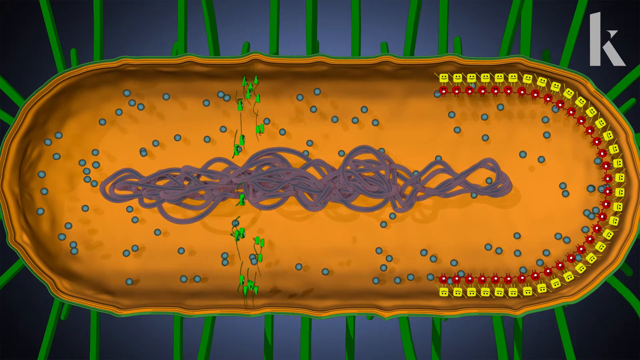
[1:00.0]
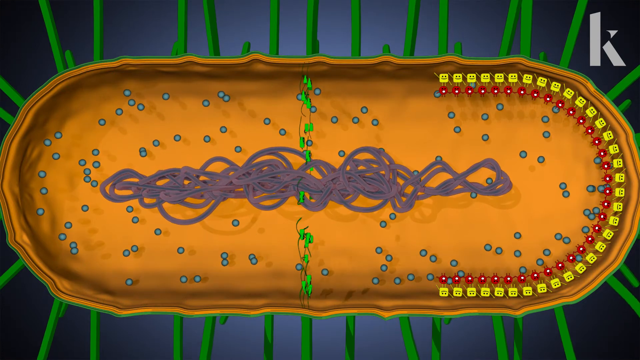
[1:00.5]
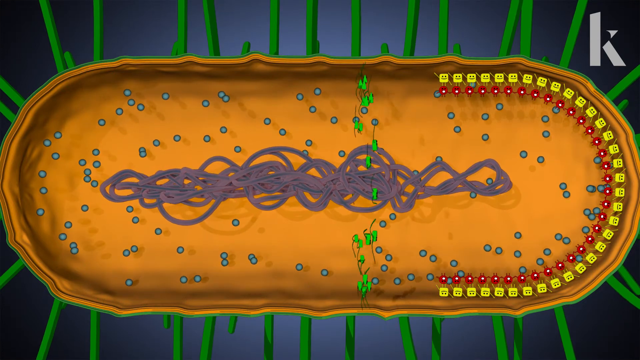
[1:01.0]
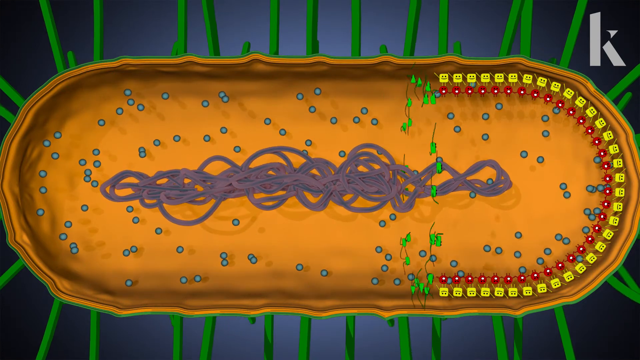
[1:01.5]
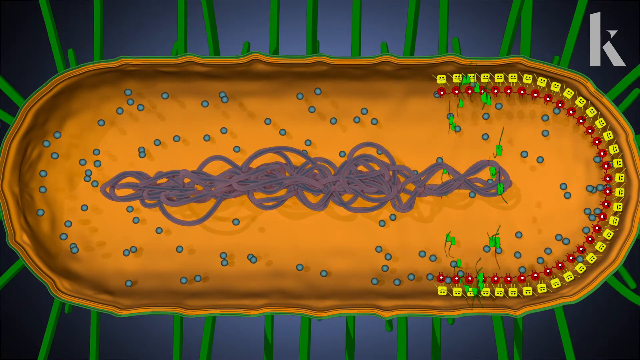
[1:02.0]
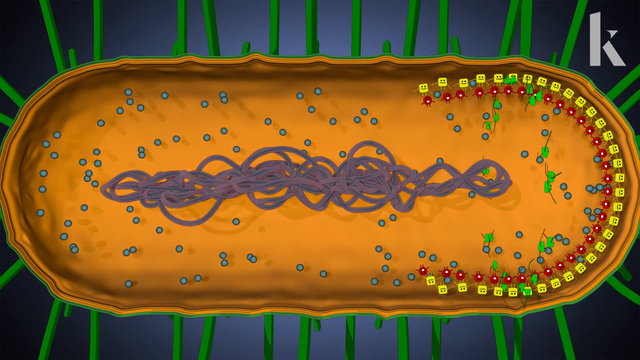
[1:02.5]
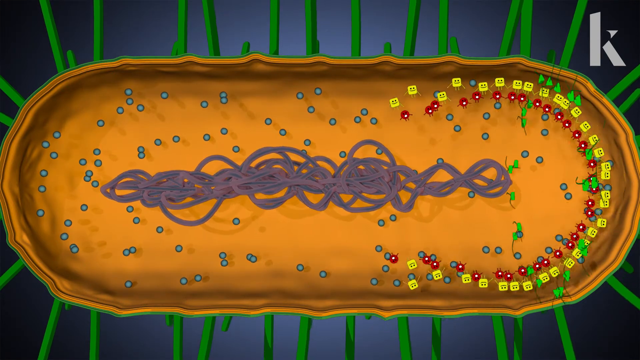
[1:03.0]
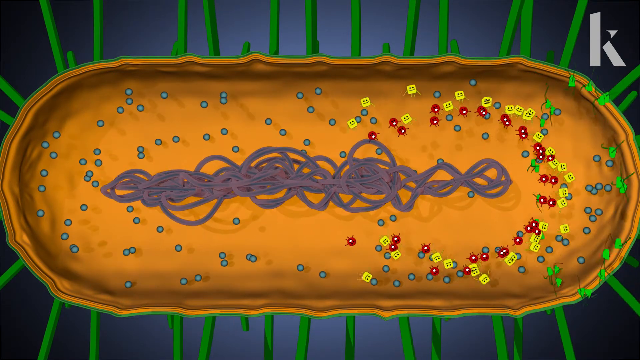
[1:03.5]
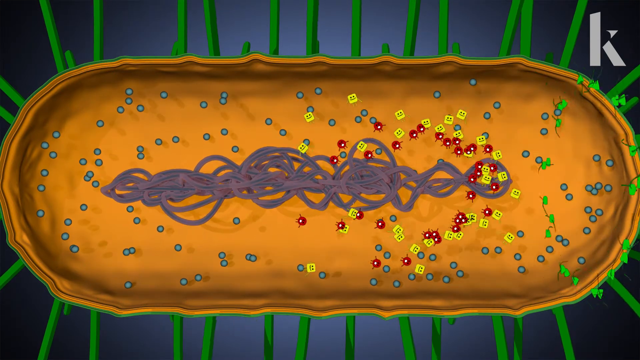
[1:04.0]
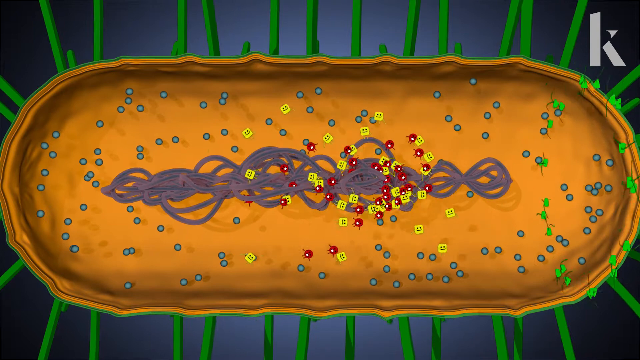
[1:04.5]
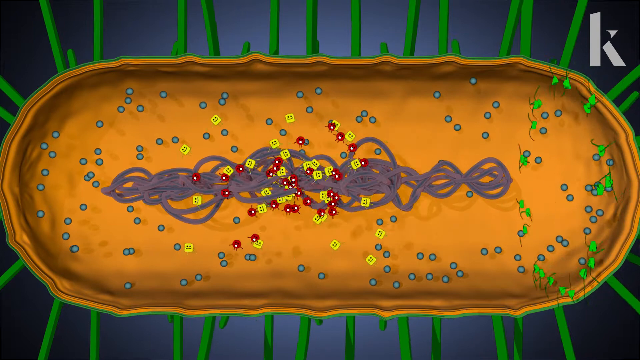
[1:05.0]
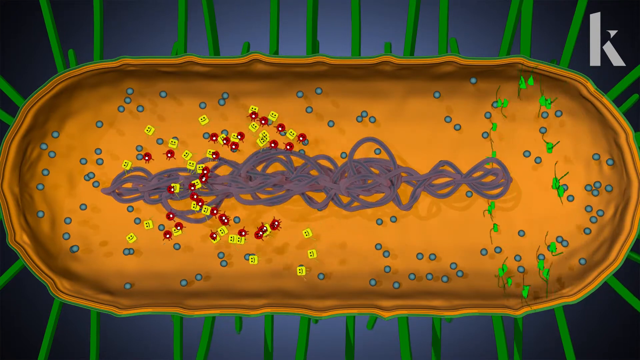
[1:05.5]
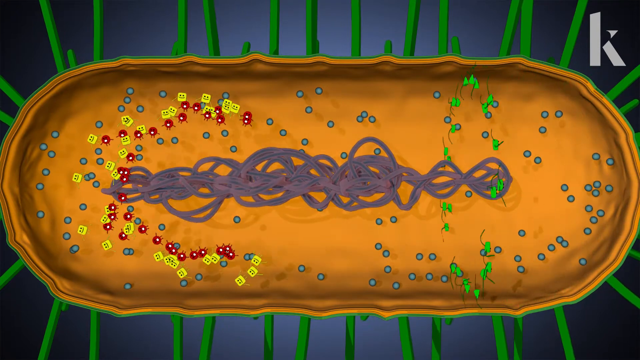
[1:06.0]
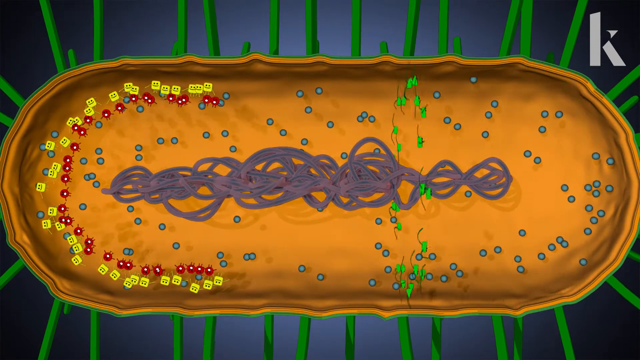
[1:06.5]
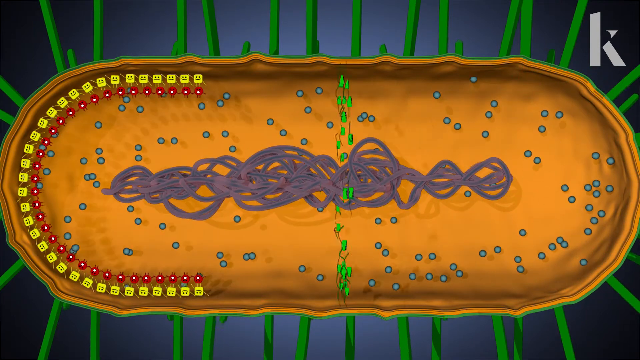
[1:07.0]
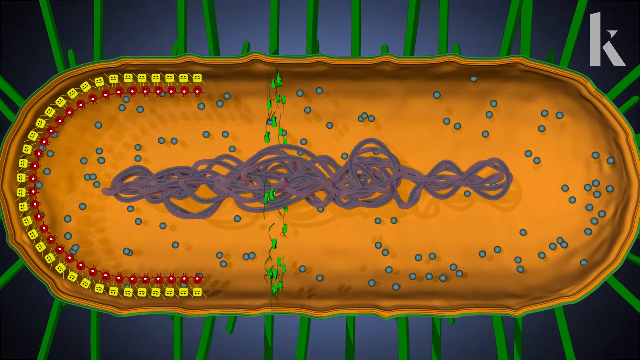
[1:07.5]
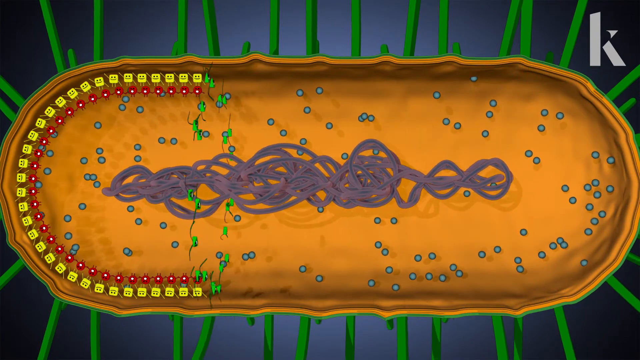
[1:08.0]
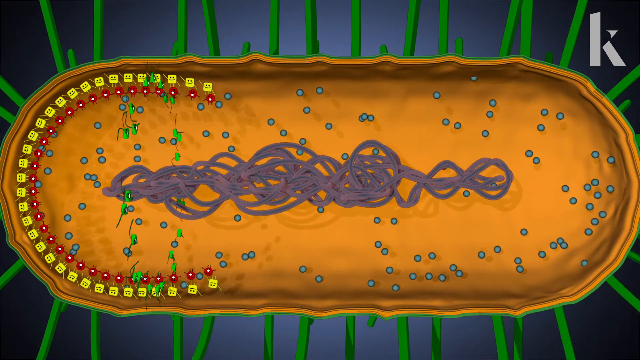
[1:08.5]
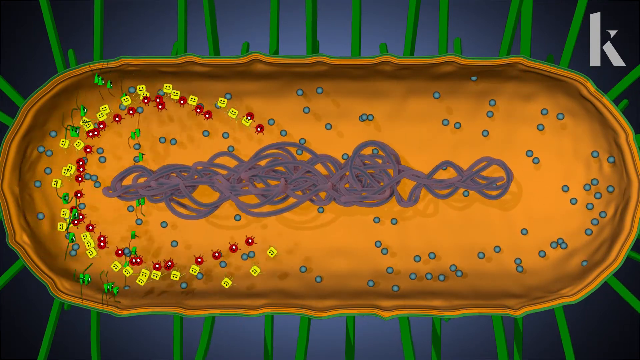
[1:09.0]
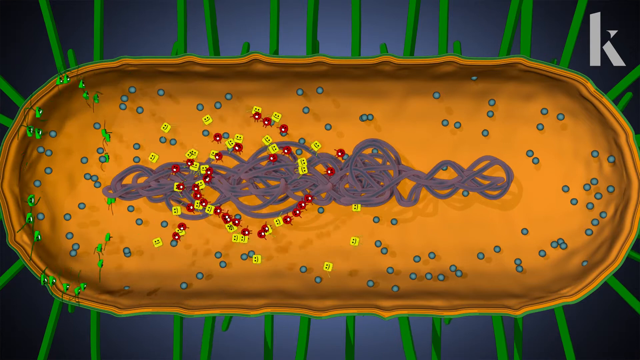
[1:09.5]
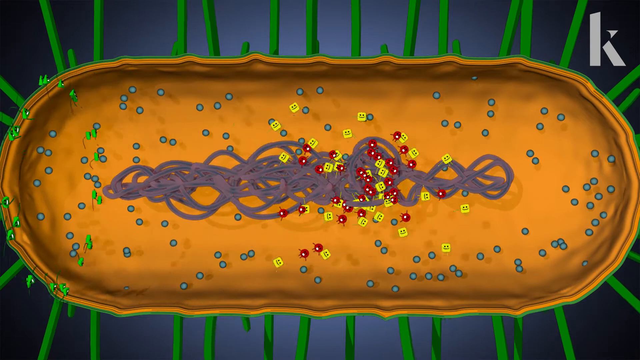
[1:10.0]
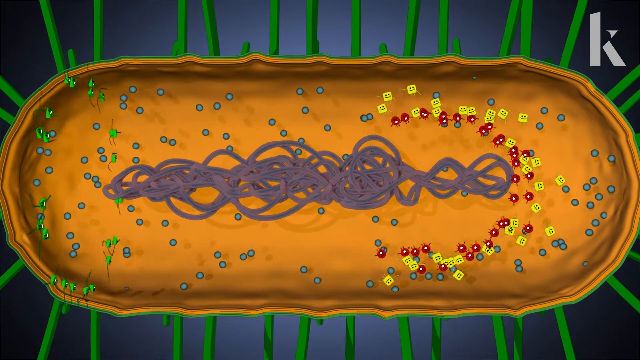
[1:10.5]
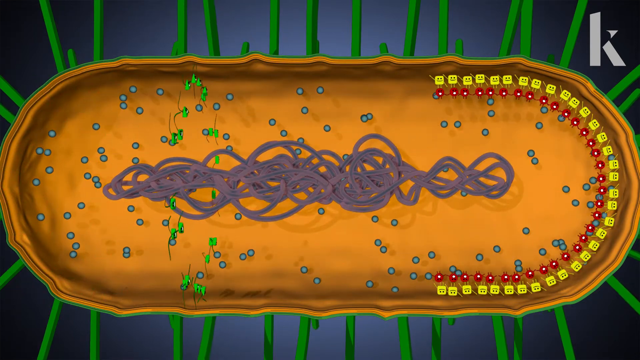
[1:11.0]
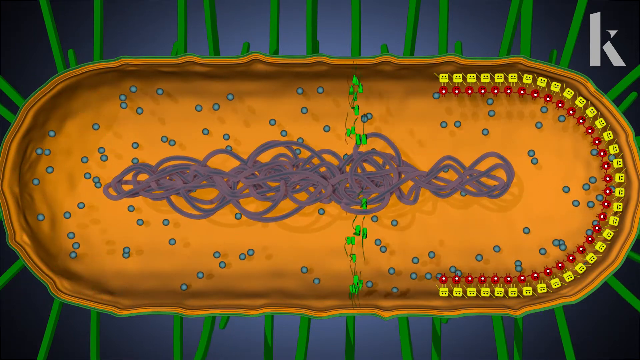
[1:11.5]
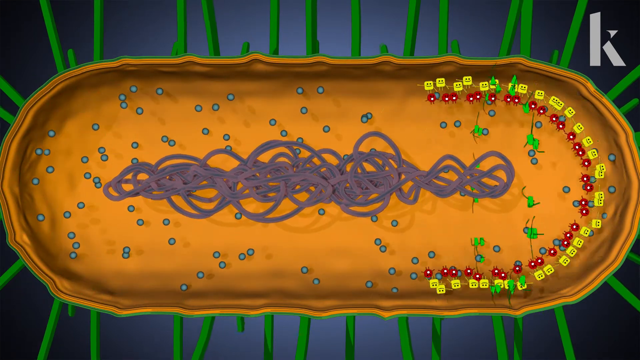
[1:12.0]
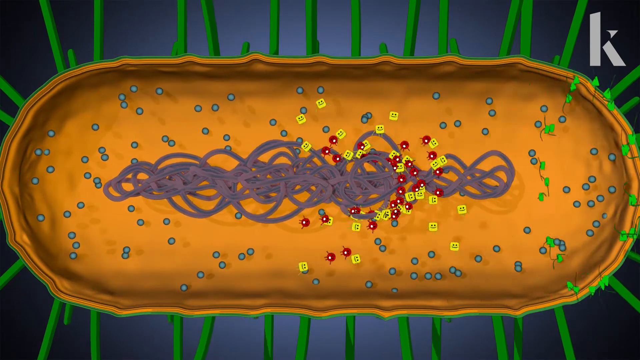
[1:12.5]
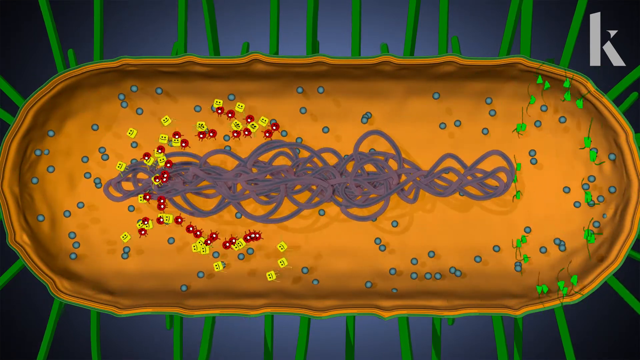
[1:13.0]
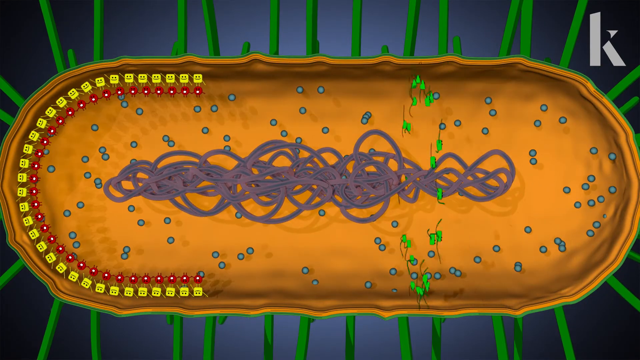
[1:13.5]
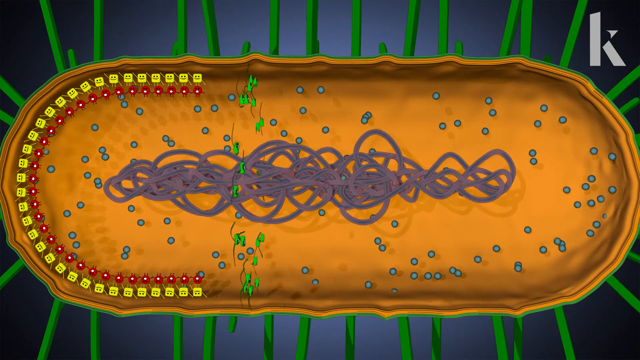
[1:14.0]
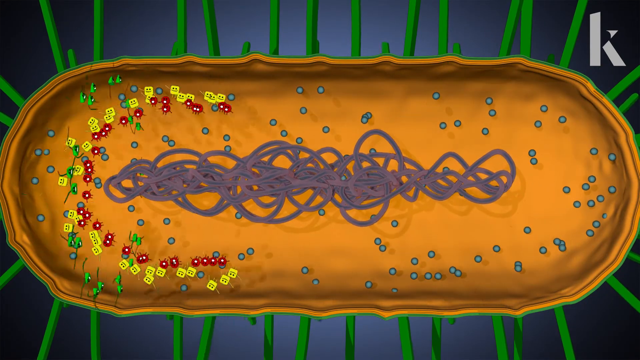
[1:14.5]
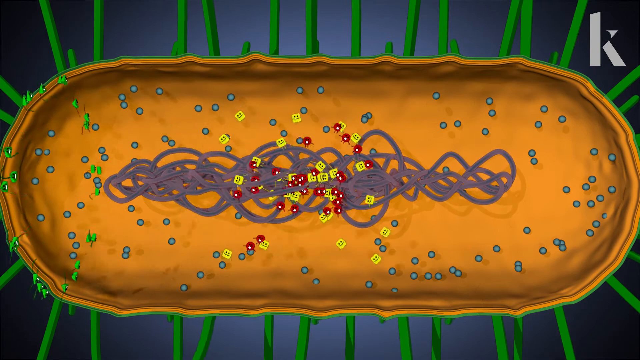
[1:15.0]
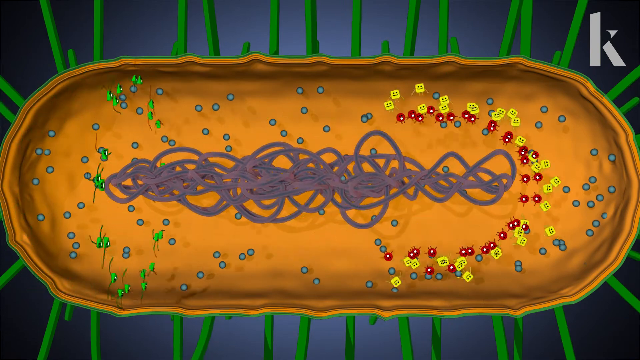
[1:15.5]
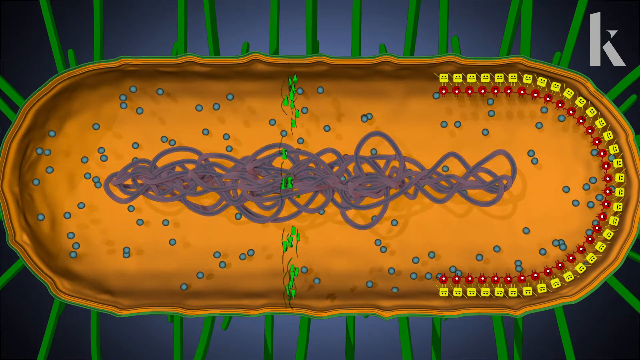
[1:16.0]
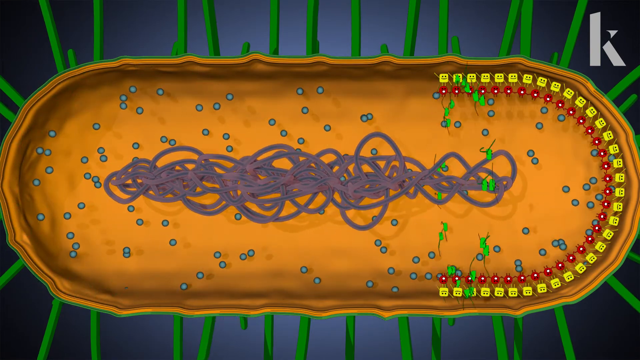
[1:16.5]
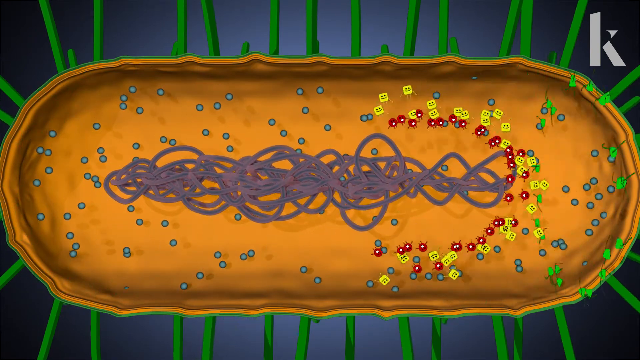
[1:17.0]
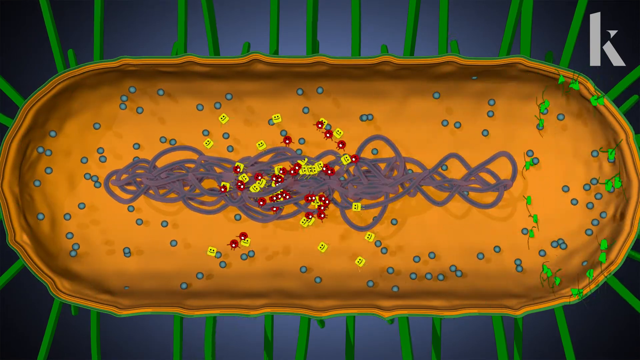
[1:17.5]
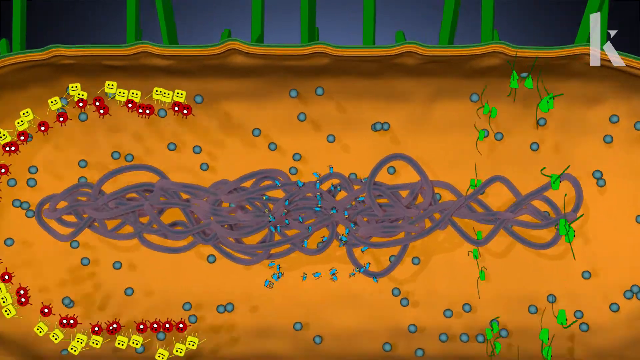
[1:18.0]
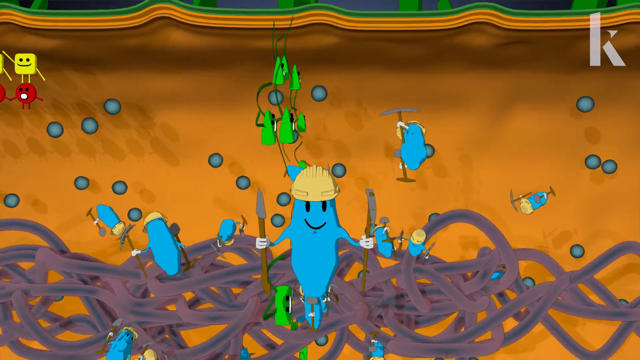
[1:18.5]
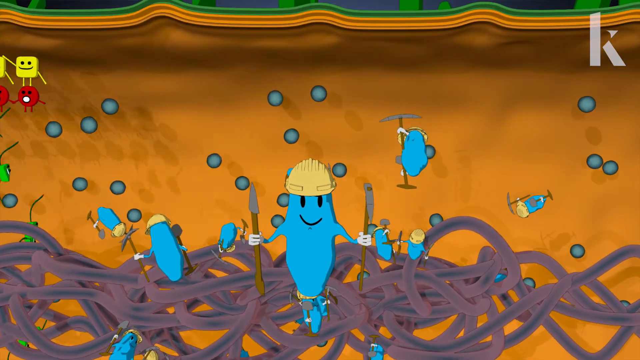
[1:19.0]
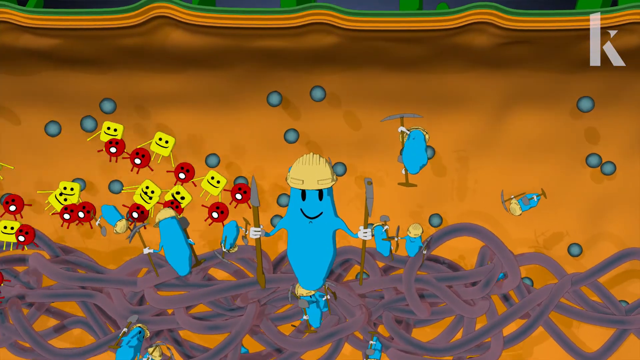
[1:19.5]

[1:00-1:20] The same action continues: the green triangle-shaped animations interact with the yellow ones, and the yellow and red ones move to the other side of the bacterium in a left, right, left, right motion. This back and forth repeats over and over, getting a little faster and faster. A zoomed-in view then shows light blue elongated animations with smiley faces, wearing hard hats and carrying pickaxes, shovels and a spear; they also appear to be wearing gloves. The setting is still inside the bacterium. At the end, the view starts to zoom out.